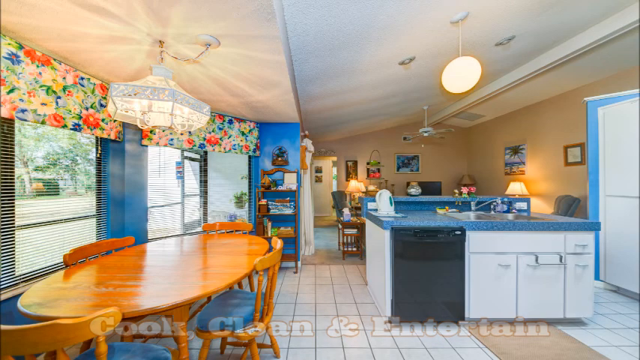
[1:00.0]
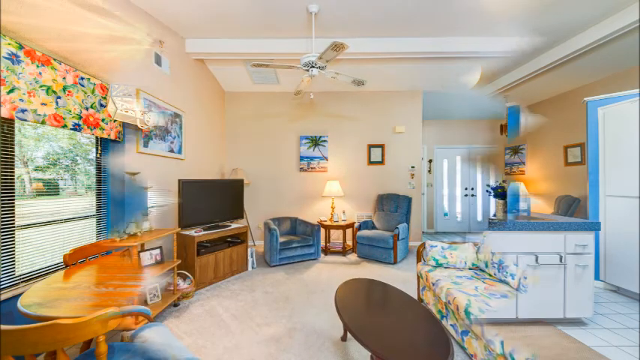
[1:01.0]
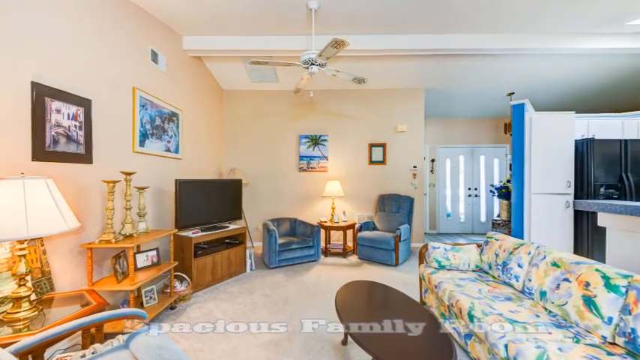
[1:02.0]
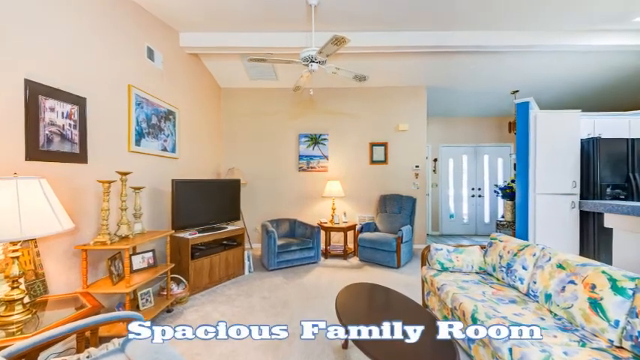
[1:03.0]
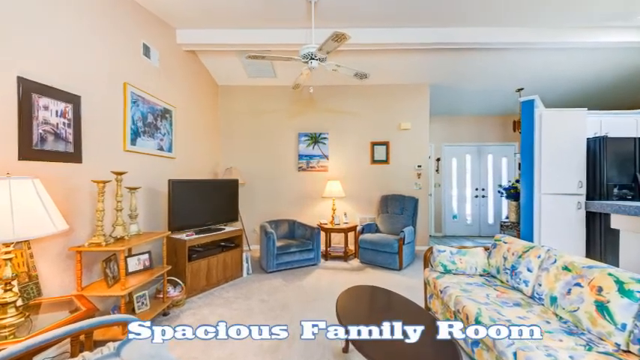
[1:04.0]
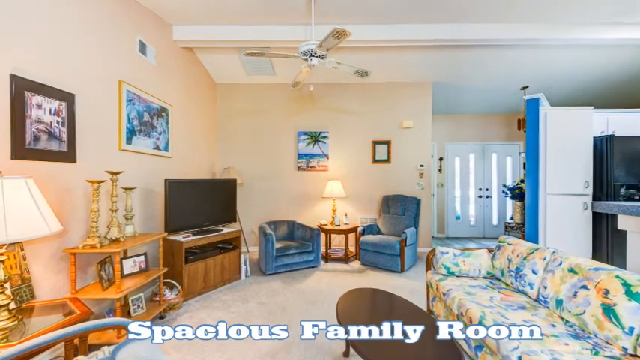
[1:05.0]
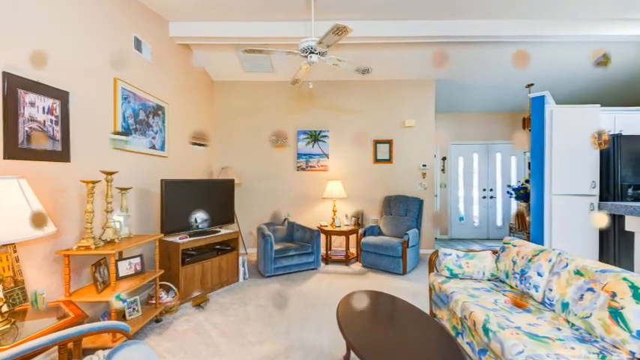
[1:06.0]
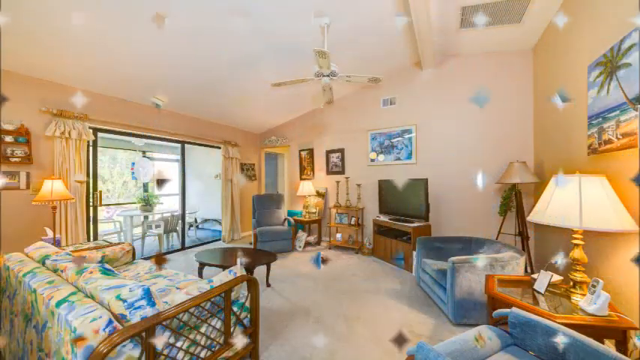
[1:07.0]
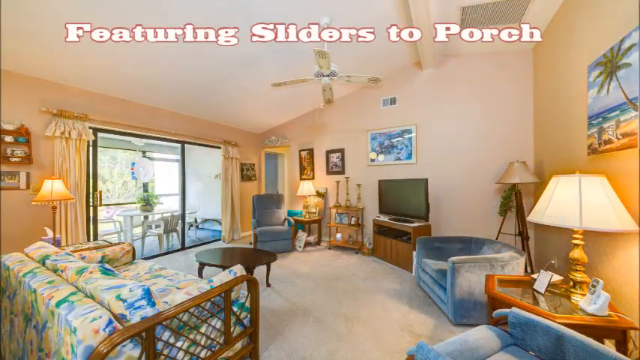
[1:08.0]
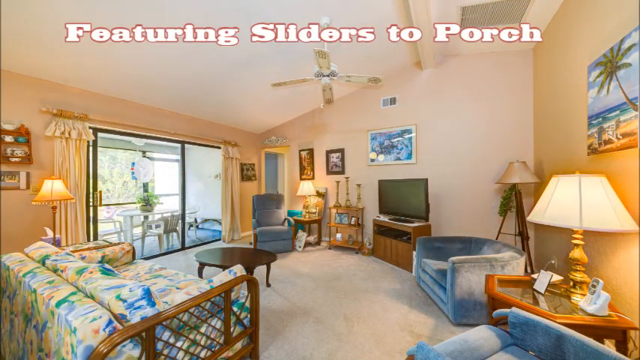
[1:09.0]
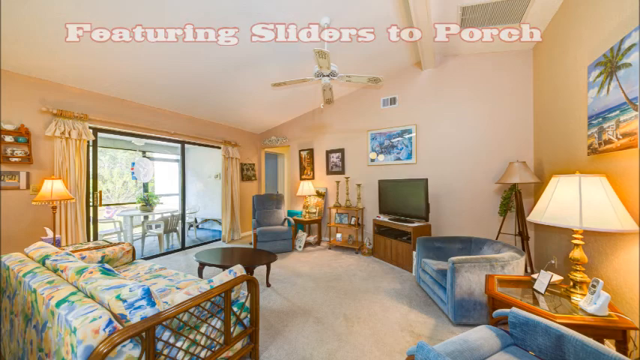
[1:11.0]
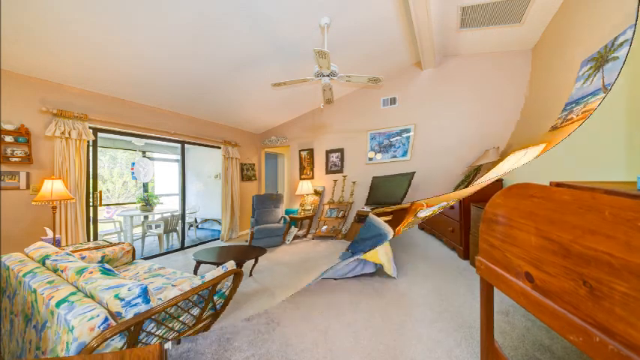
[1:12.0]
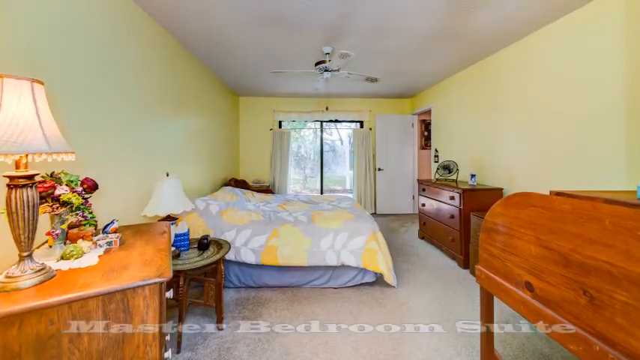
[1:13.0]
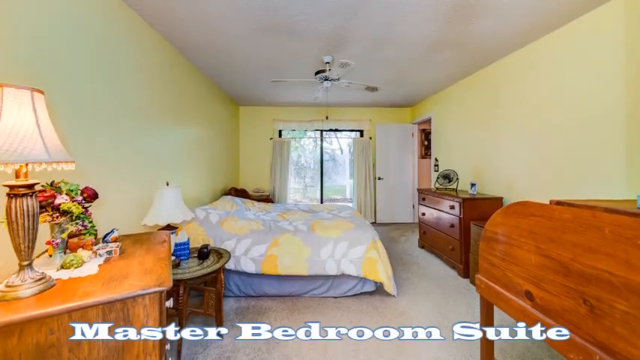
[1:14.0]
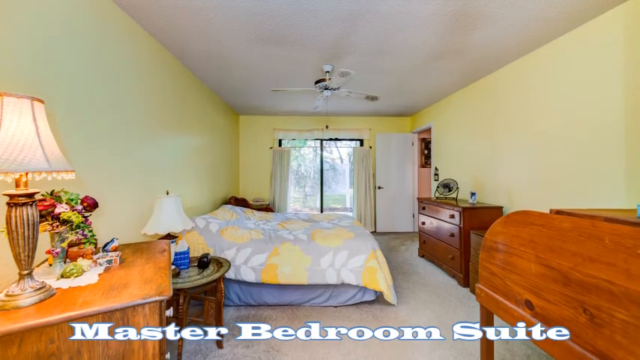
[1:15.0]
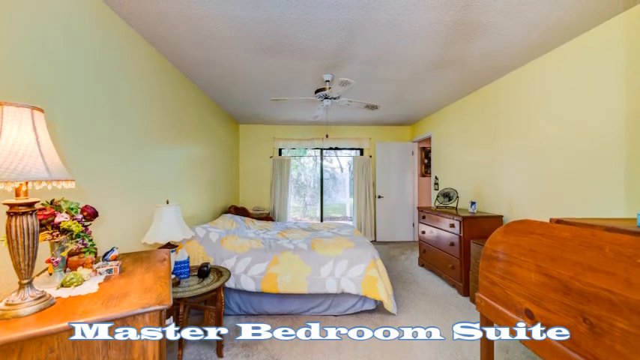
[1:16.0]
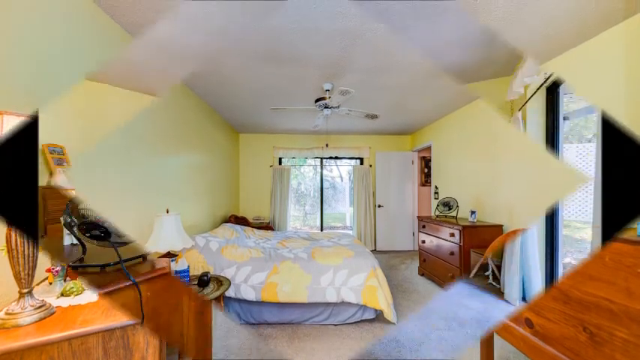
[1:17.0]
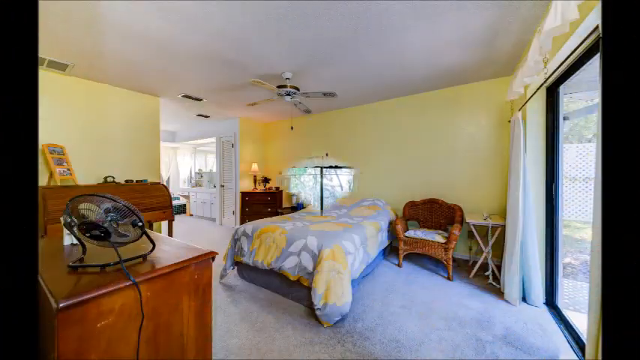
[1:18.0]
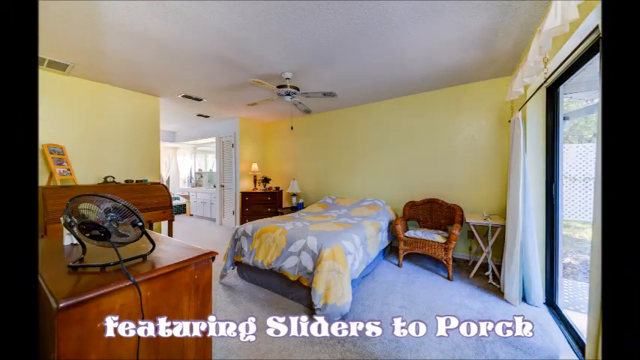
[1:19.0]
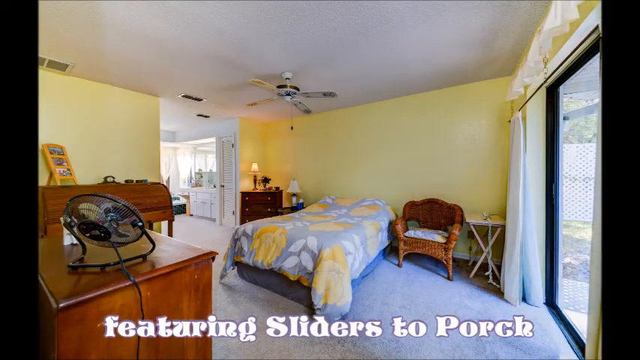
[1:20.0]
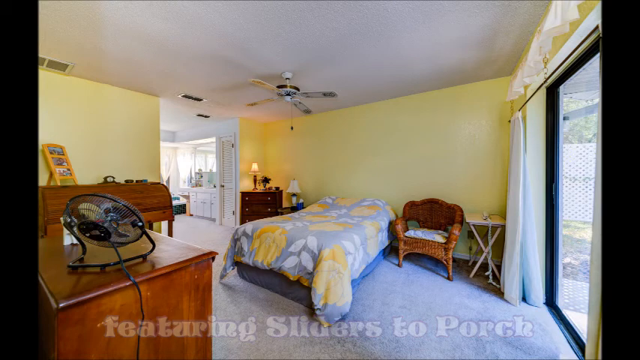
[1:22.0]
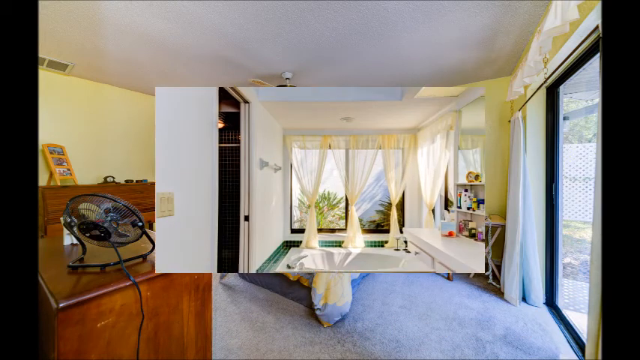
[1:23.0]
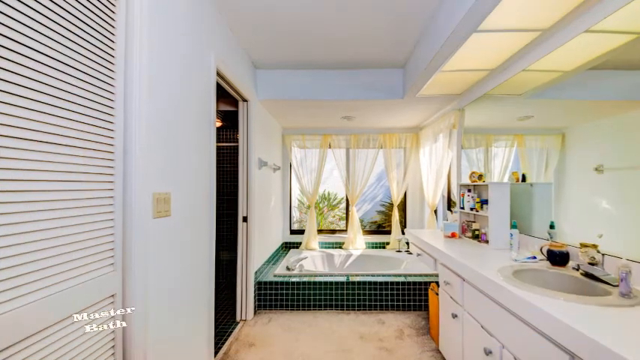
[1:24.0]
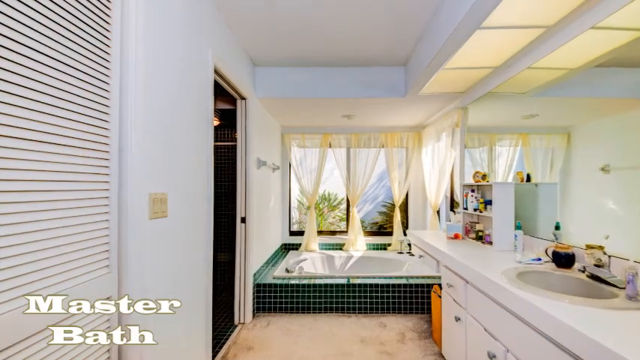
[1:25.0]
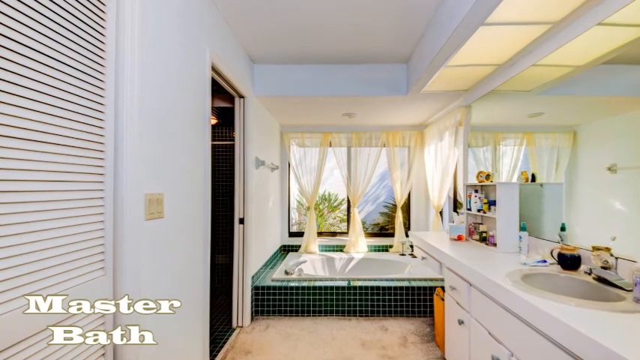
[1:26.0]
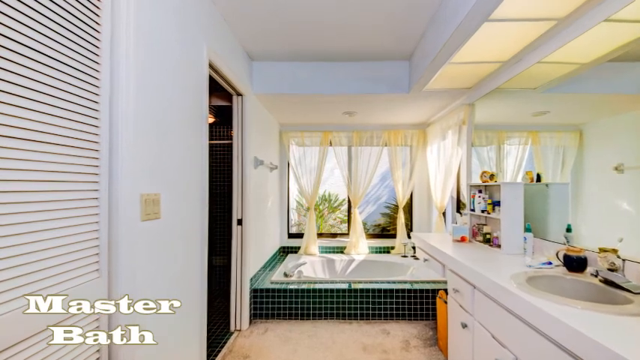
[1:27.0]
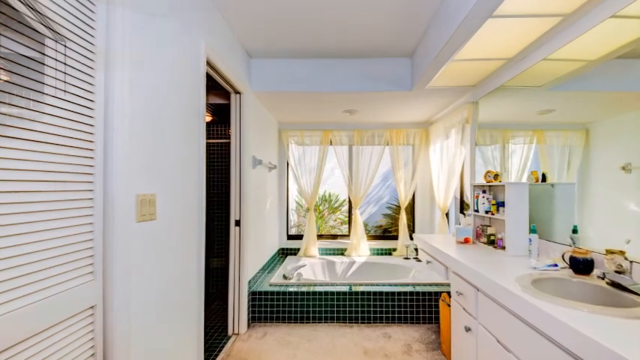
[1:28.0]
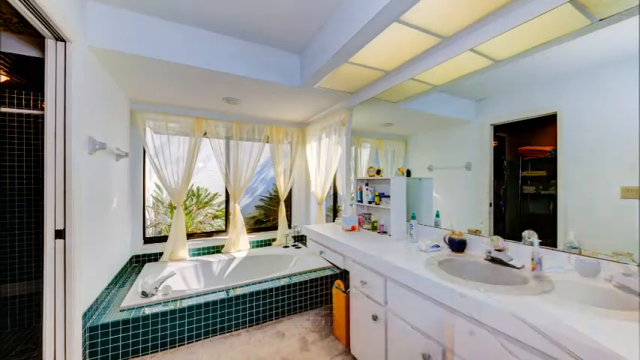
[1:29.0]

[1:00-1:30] The video focuses on the living area to the right of the entrance doors, which has a ceiling fan and a seating area with a lot of older style furniture. This seating area is off of the kitchen and has sliding doors that open to what looks like an enclosed porch. The video then shows what is probably the master bedroom, with yellow walls, a bed with a gray, white and yellow bedspread, and a wooden secretary desk and dresser. A very white master bathroom comes off of it, with a sink area with a mirror behind it and, up against the windows, a garden tub: a white tub set into green tile. The video indicates the garden tub and a separate walk-in shower in the master bathroom.